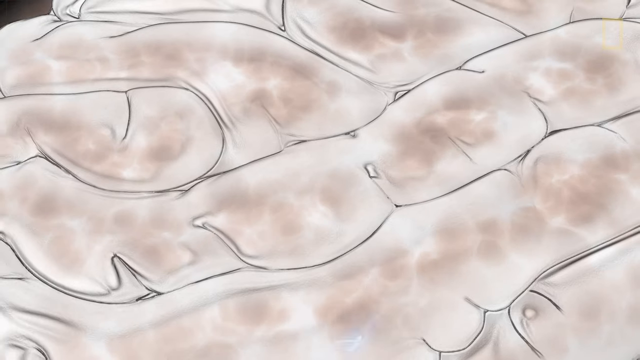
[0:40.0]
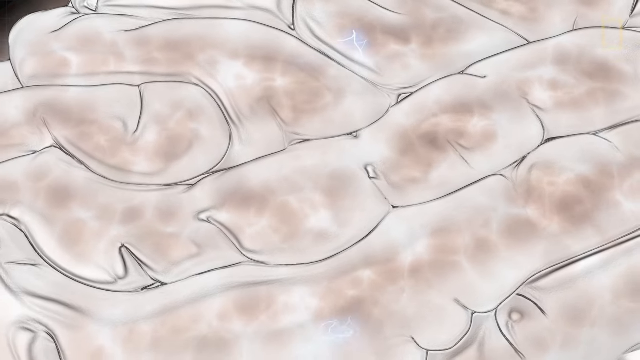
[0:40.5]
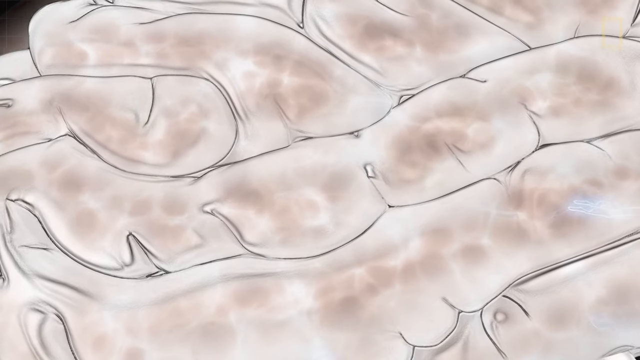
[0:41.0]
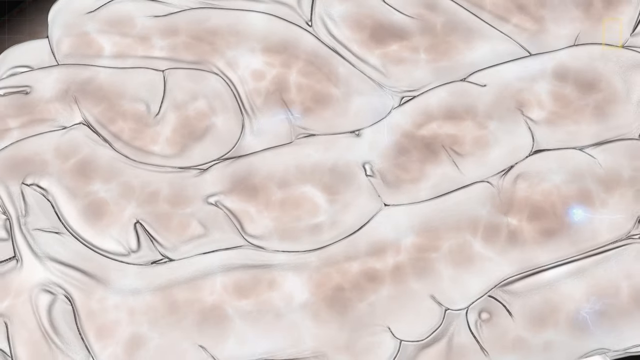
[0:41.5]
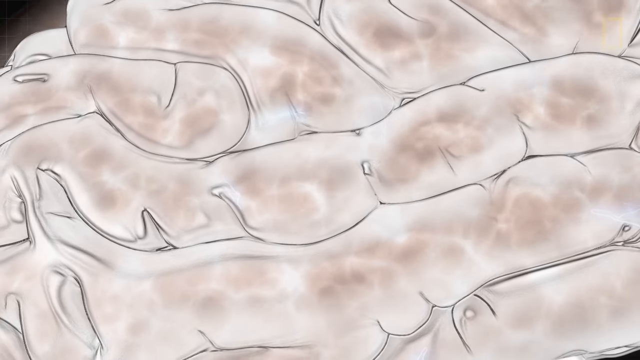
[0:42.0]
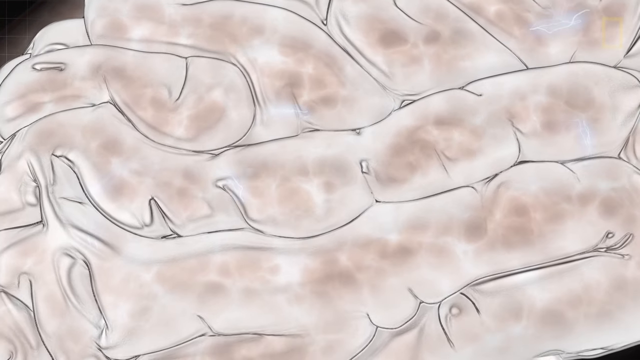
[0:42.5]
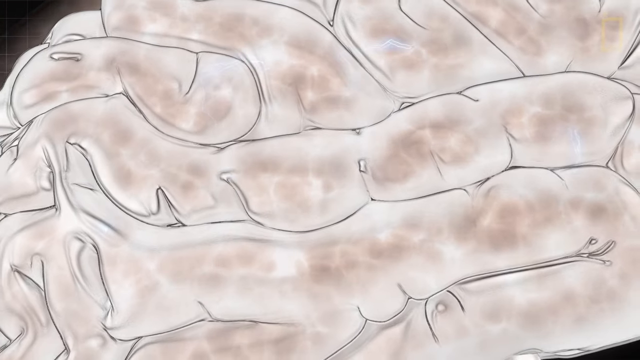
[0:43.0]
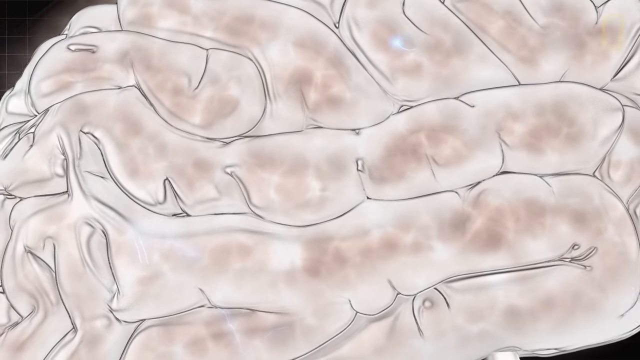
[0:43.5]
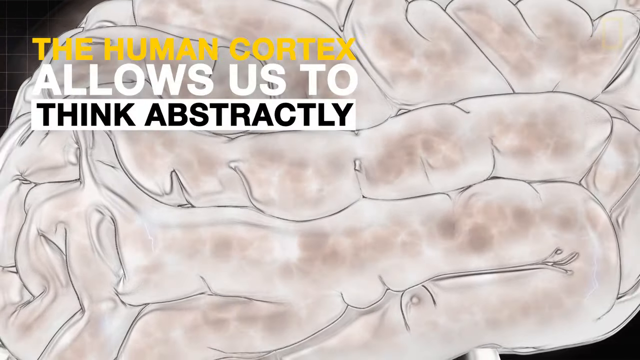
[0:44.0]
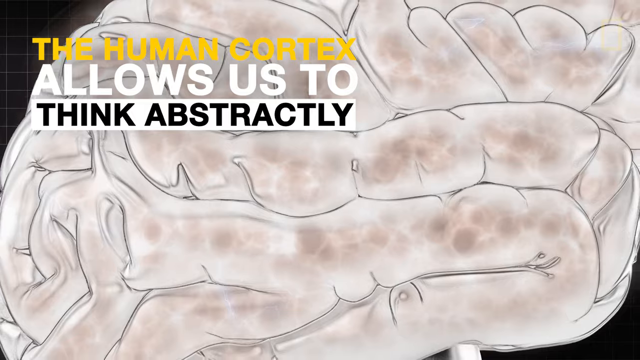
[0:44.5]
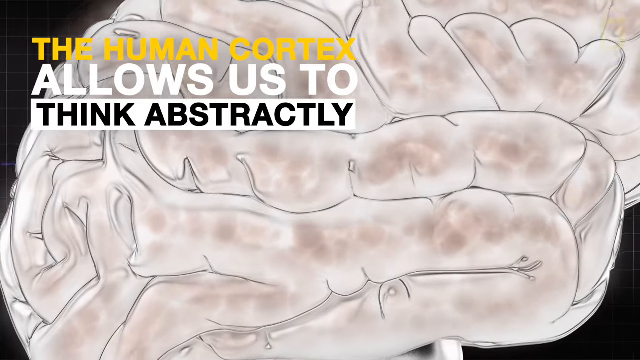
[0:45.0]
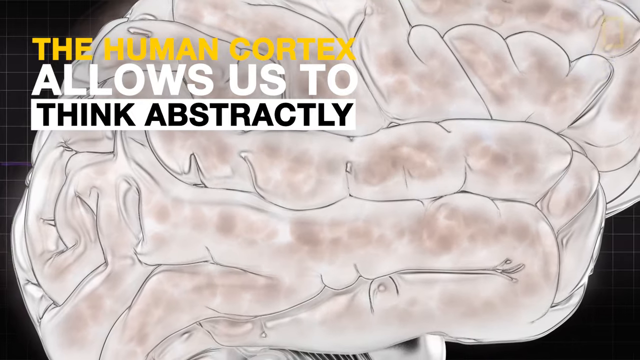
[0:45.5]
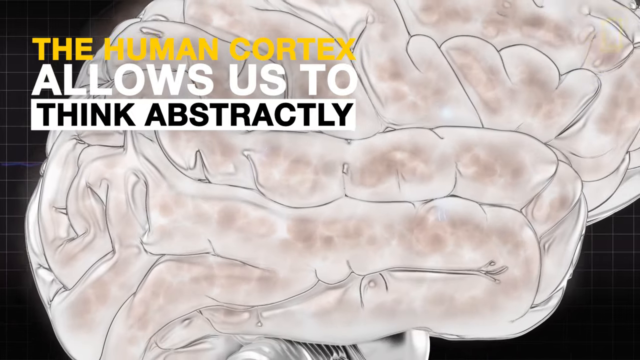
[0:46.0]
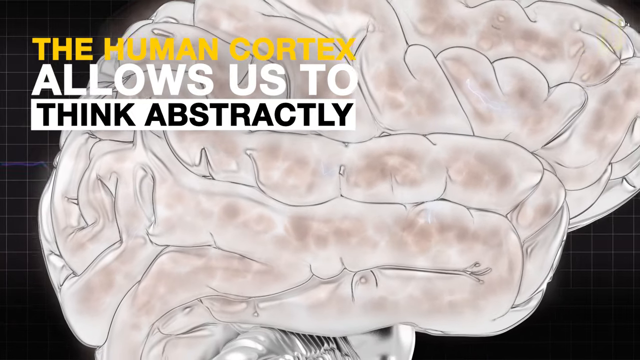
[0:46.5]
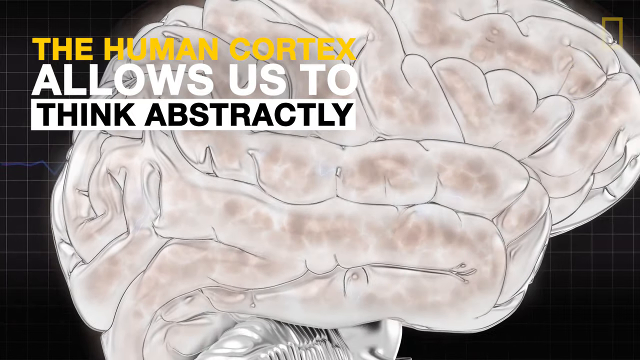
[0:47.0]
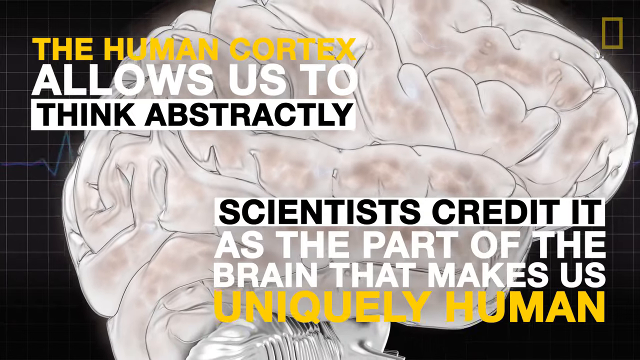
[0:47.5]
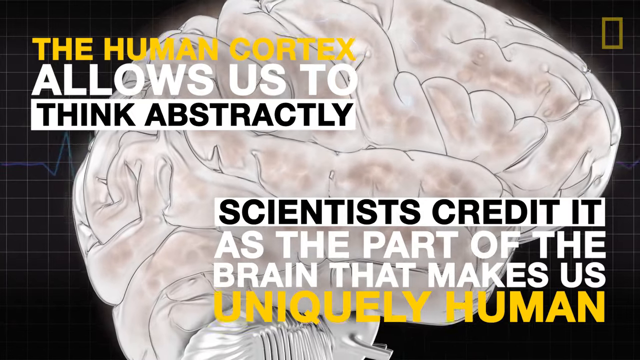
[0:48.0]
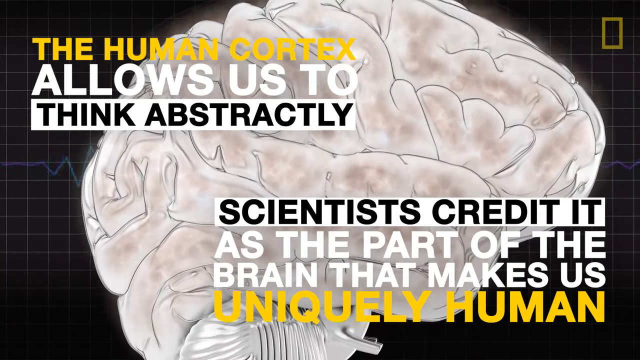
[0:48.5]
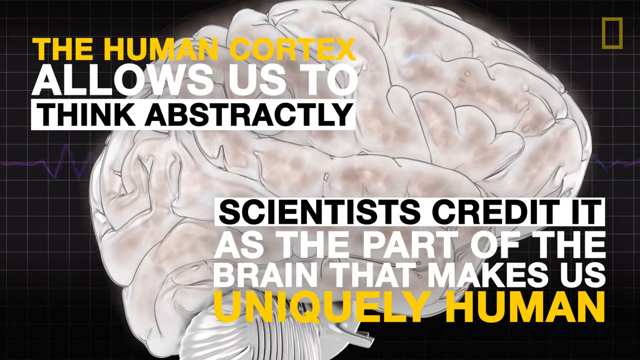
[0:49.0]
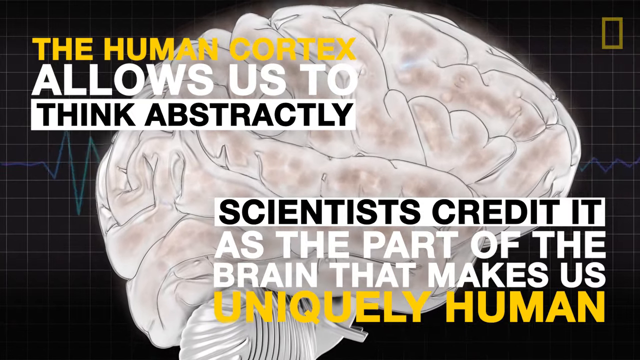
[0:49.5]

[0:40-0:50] The man kind of puts his right hand up just below his chin with his palm kind of facing toward himself. The video then switches to a new graphic on the black grid background: a white brain, more of an illustration than a realistic-looking brain, kind of comes in very close, rotates, and then moves a little further out. Text reads "we now have." In the upper left, yellow text reads "the human cortex," beneath it slightly larger white all-caps text reads "allows us to," and beneath that a white text box with black caps reads "think abstractly." In the lower right, a white text box in the same black caps reads "scientists credit it," followed by two lines of white caps reading "as the part of the brain that makes us," and below that larger yellow all-caps text reading "uniquely human."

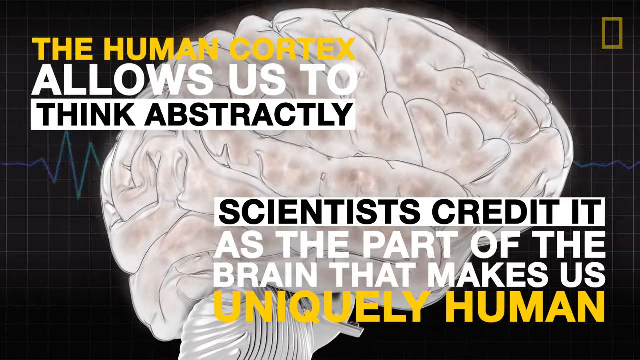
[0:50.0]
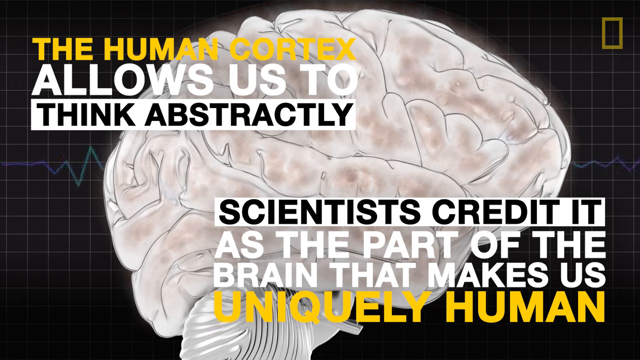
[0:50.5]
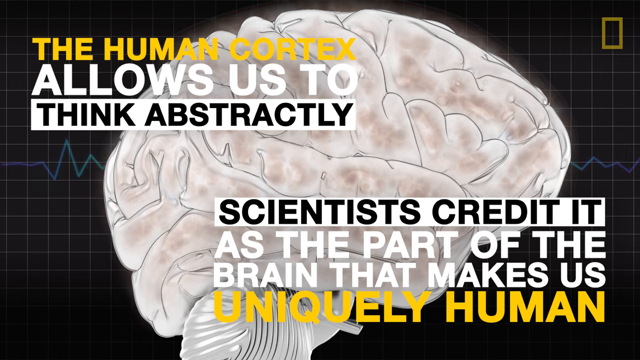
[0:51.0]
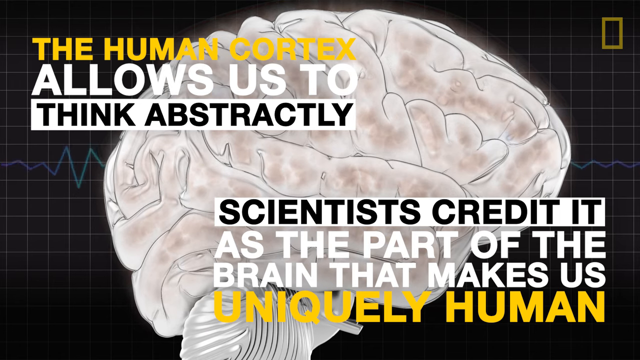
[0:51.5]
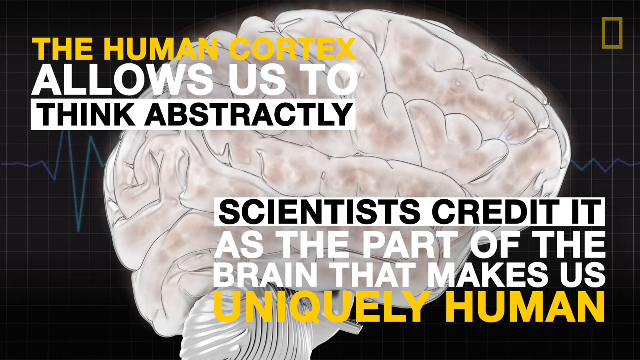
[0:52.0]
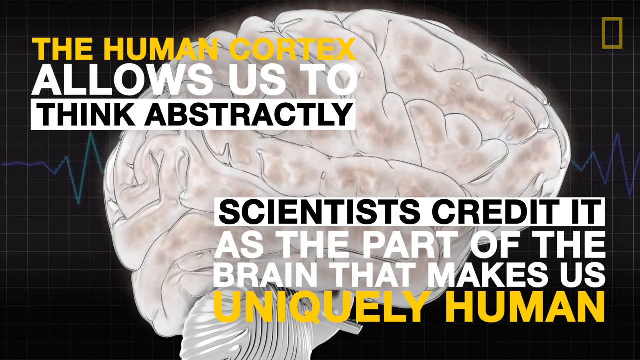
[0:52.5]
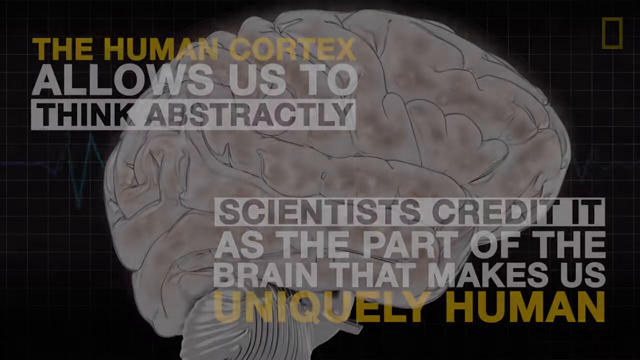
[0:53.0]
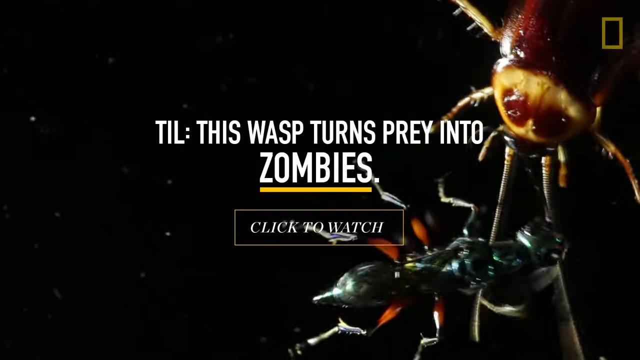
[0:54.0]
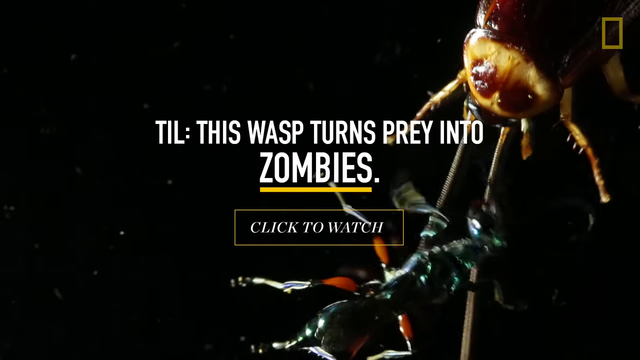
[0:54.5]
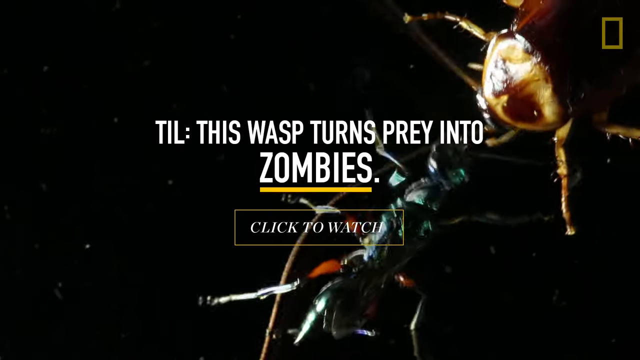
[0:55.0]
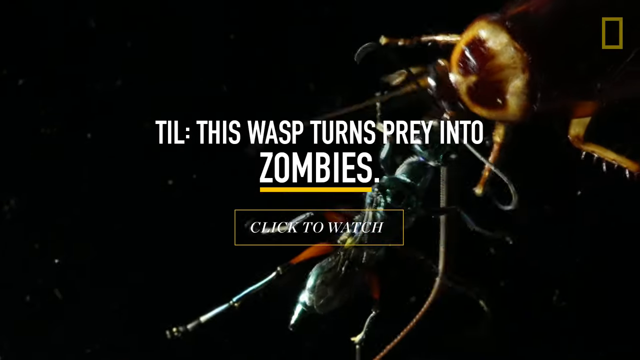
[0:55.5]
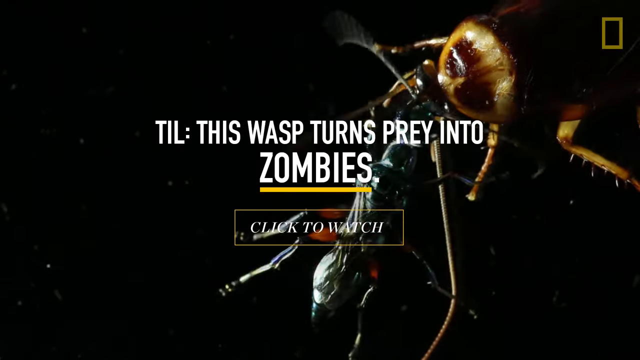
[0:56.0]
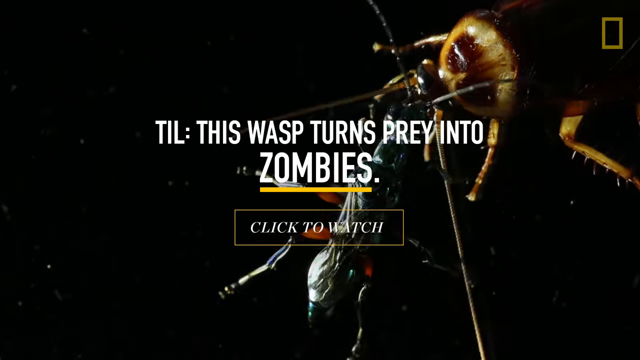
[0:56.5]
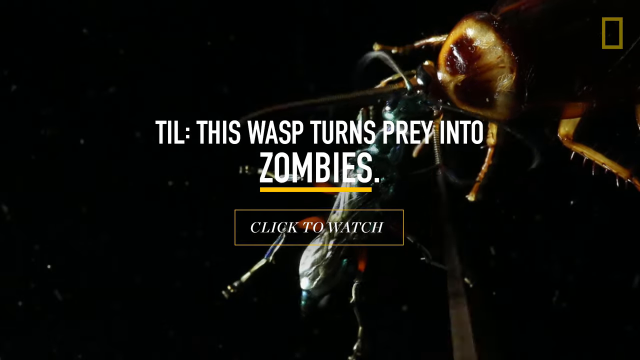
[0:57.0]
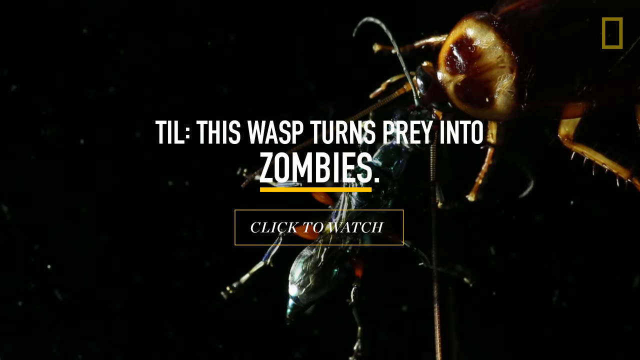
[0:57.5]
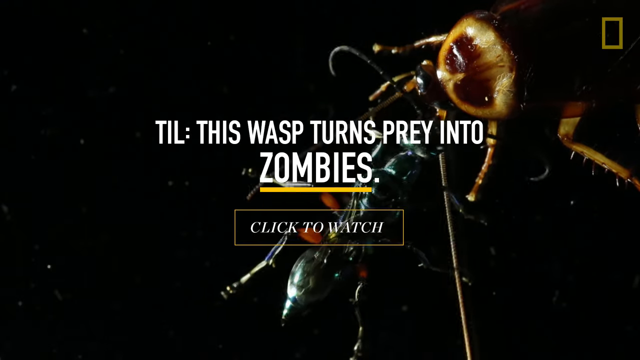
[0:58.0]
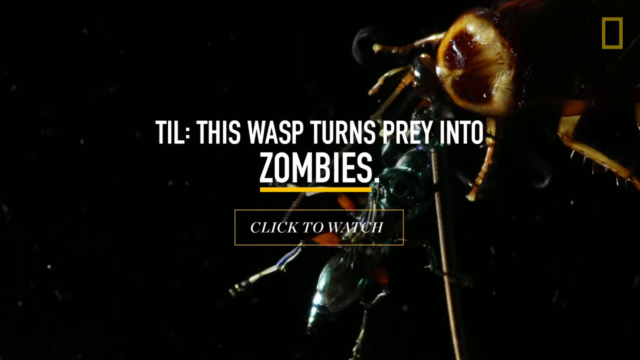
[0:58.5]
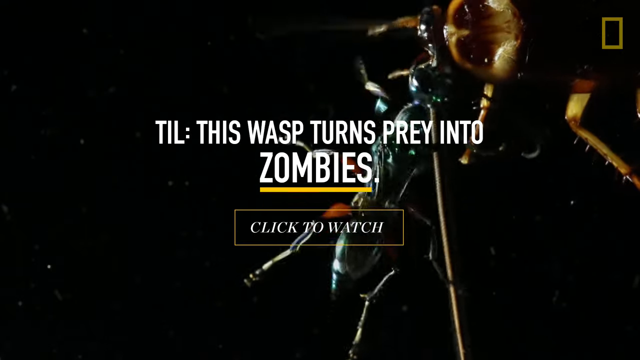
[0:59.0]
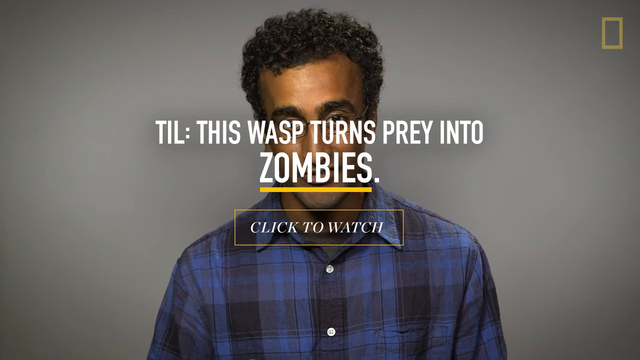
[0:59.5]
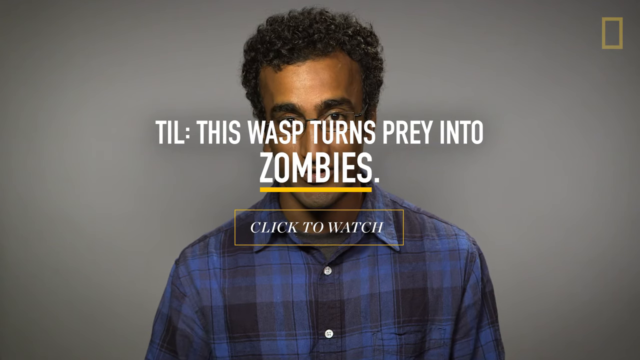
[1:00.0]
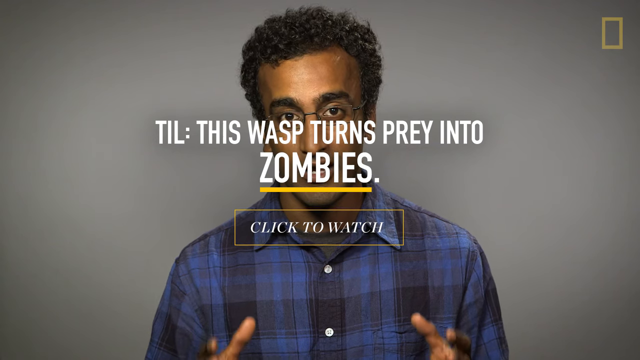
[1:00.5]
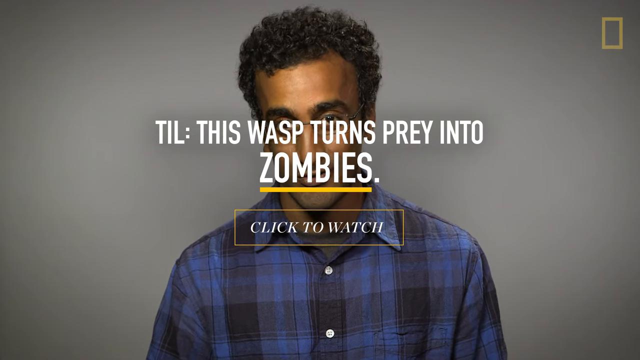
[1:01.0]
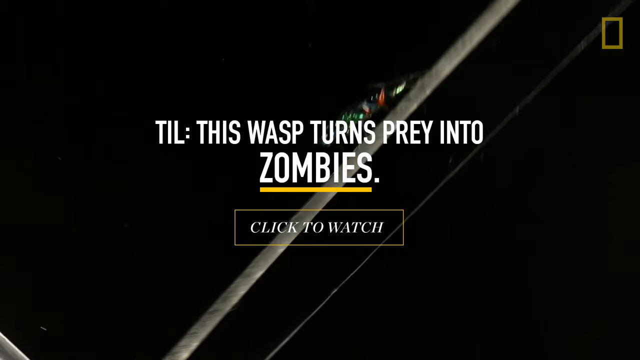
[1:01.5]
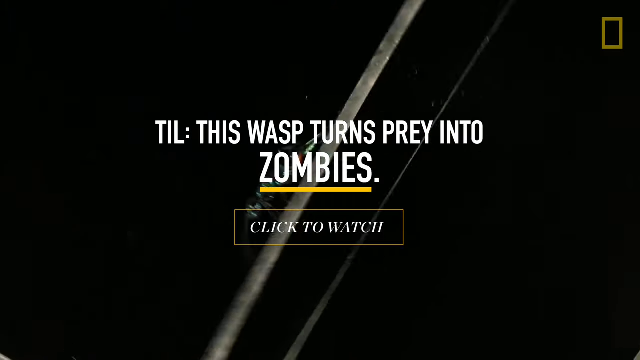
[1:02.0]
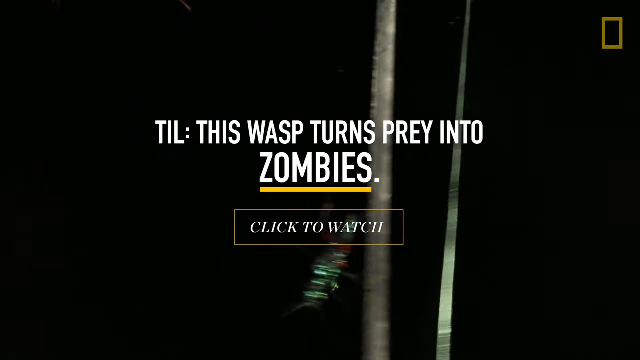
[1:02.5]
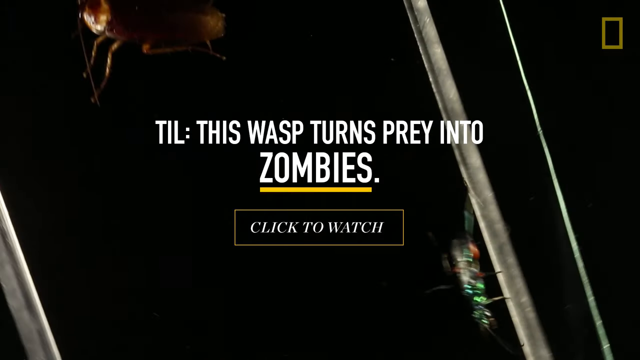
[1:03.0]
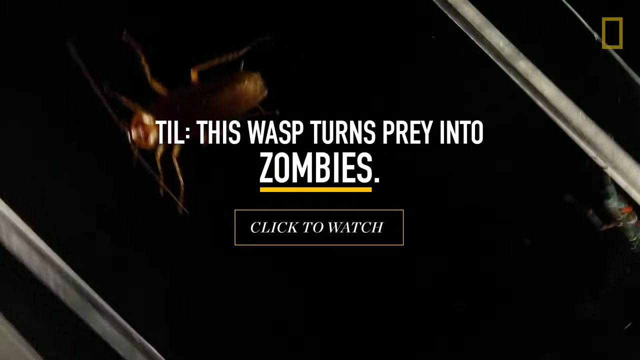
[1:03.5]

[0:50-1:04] Whenever the black grid background appears, a very small upright rectangle outlined in yellow is in the upper right, and it kind of looks like a National Geographic logo. A new graphic appears with that rectangle still present, showing white all-caps text reading "this wasp turns prey into" and, on the next line in much larger font, "zombies," underlined in yellow. A rectangle outline contains white serif all-caps text reading "click to watch." Inside it, a wasp and a beetle are kind of wrestling with each other. The video then switches to a man in a two-tone blue plaid shirt who looks like he is maybe darker-skinned, possibly from India, with wire glasses and short, curly dark brown or black hair. He is talking, with text over his face.